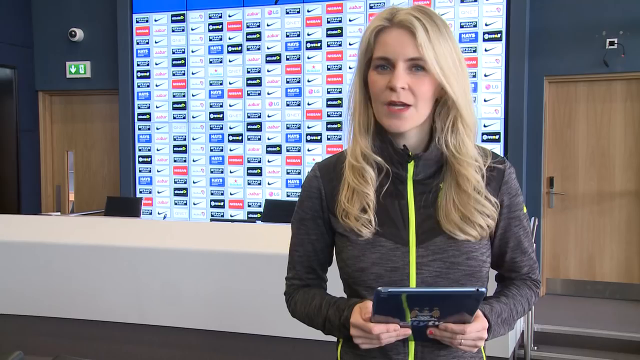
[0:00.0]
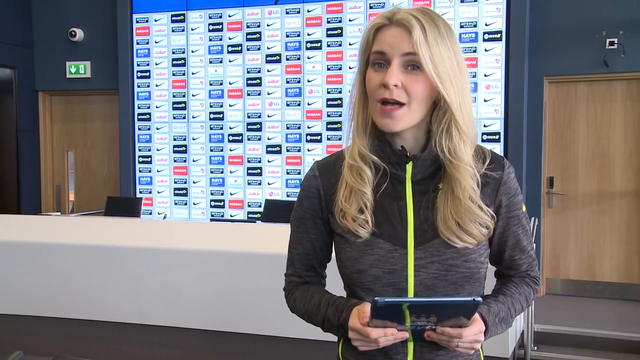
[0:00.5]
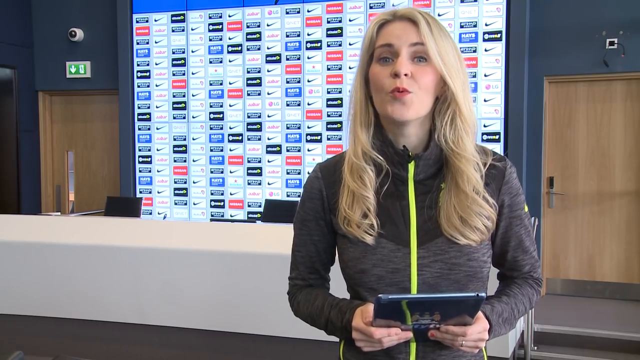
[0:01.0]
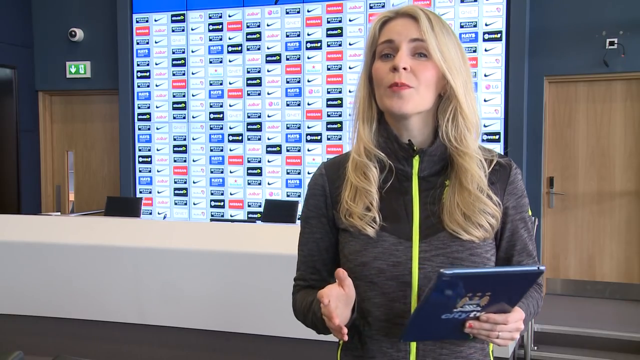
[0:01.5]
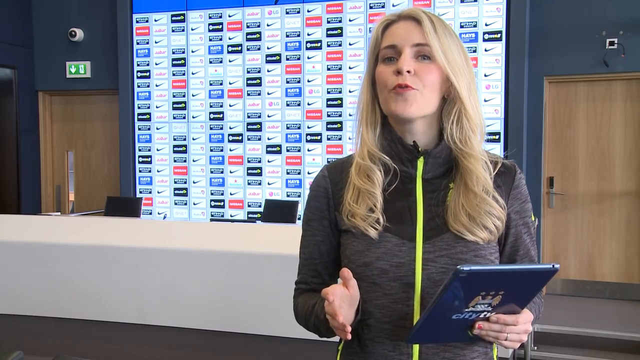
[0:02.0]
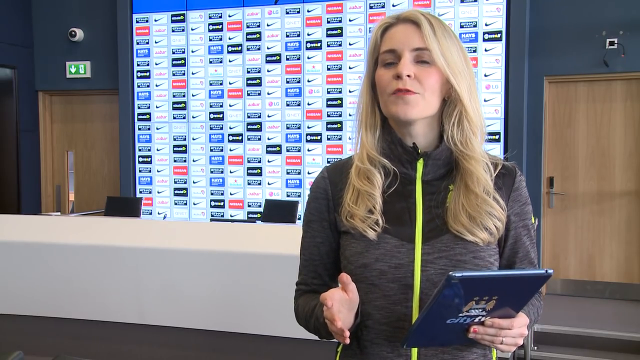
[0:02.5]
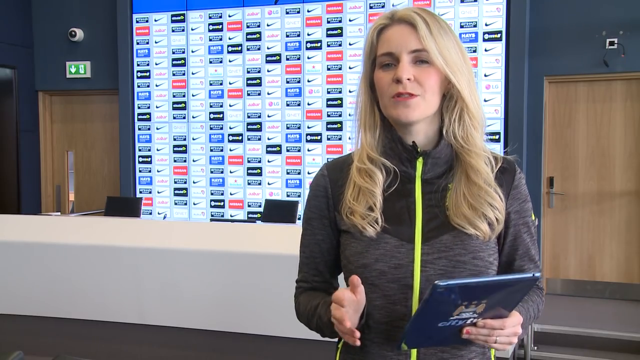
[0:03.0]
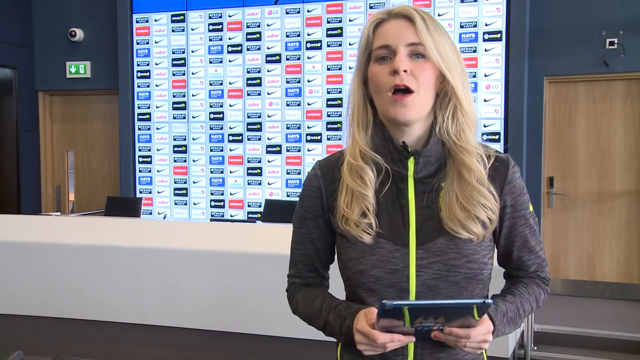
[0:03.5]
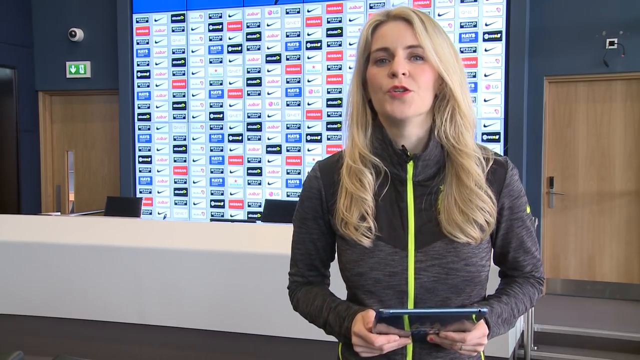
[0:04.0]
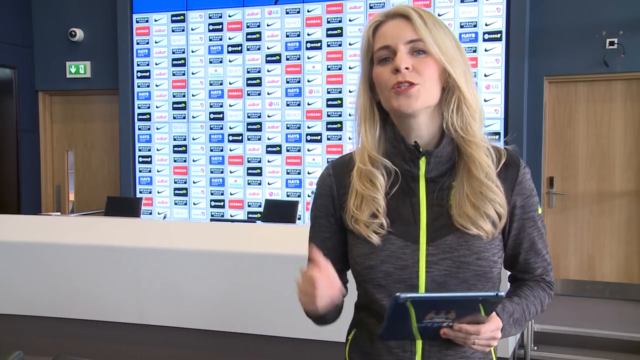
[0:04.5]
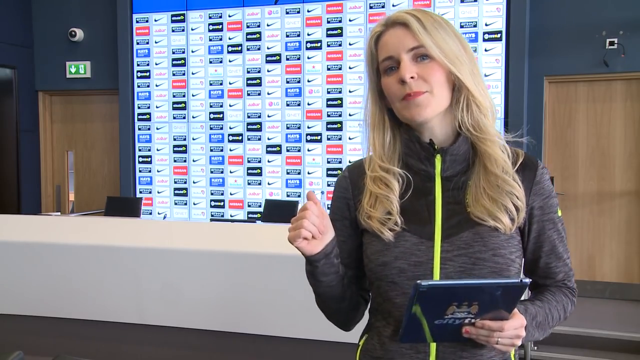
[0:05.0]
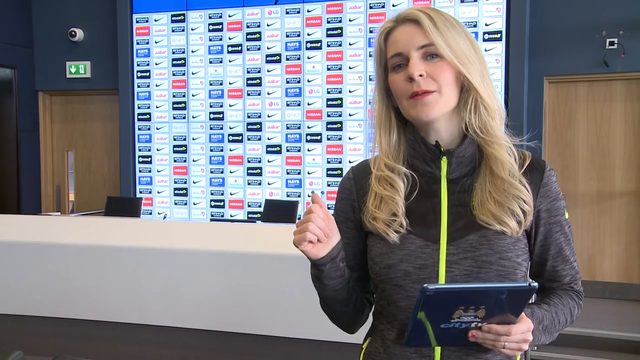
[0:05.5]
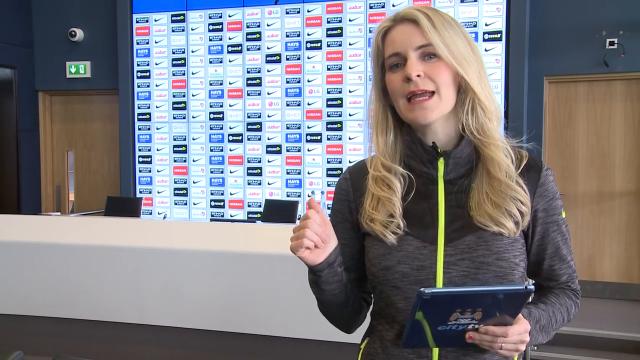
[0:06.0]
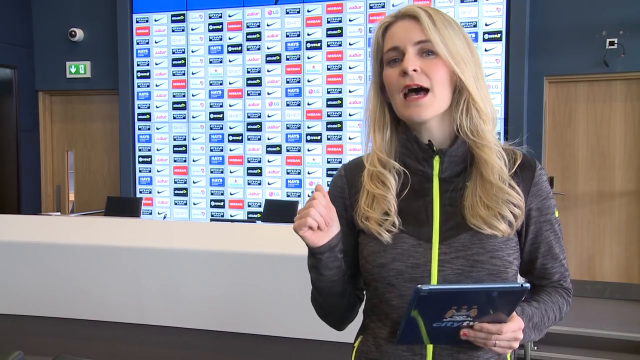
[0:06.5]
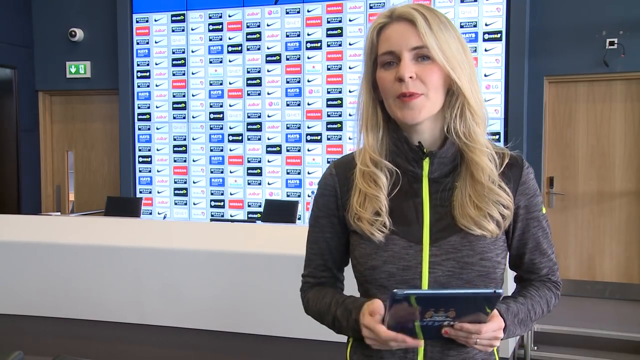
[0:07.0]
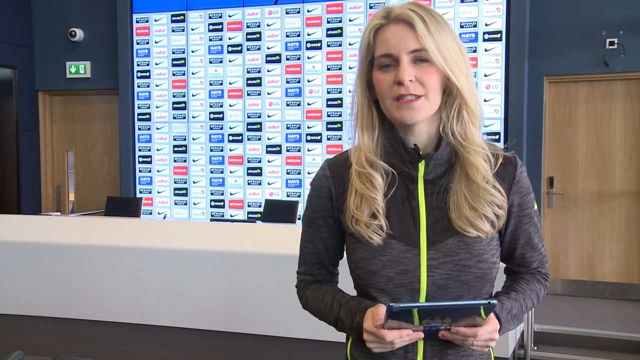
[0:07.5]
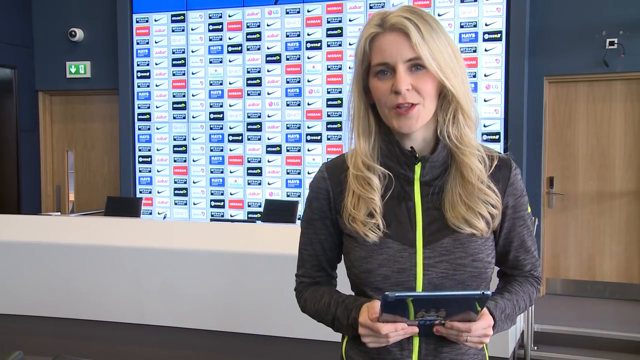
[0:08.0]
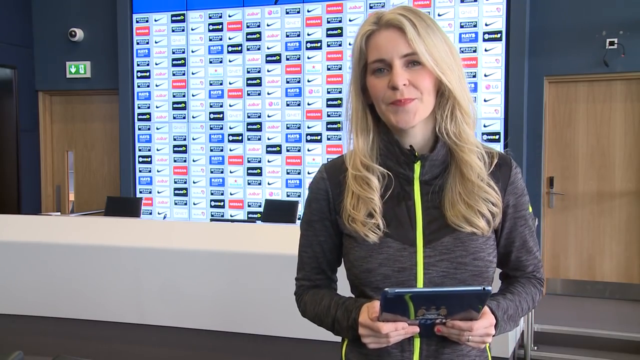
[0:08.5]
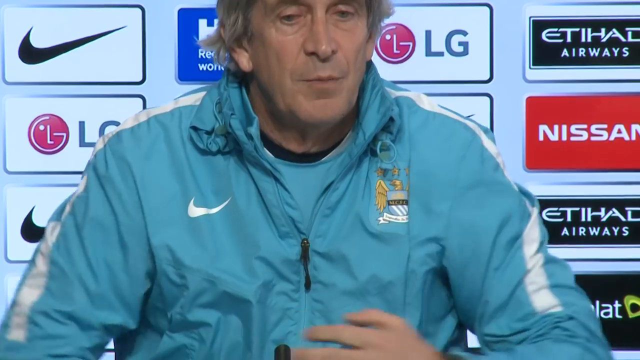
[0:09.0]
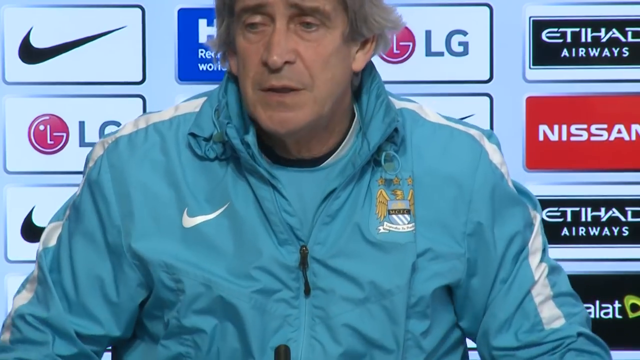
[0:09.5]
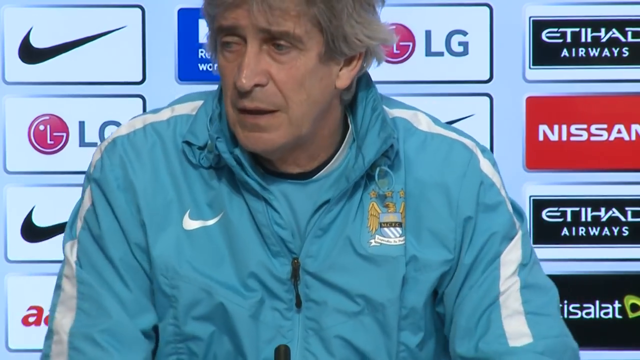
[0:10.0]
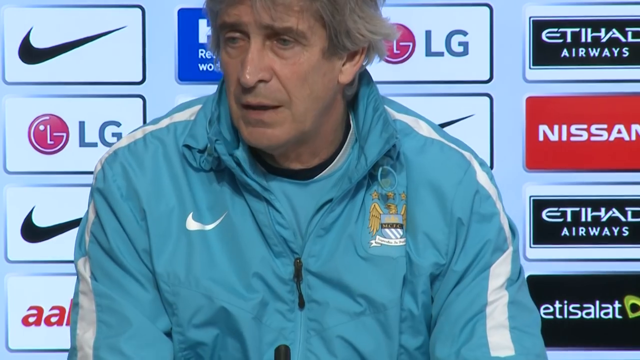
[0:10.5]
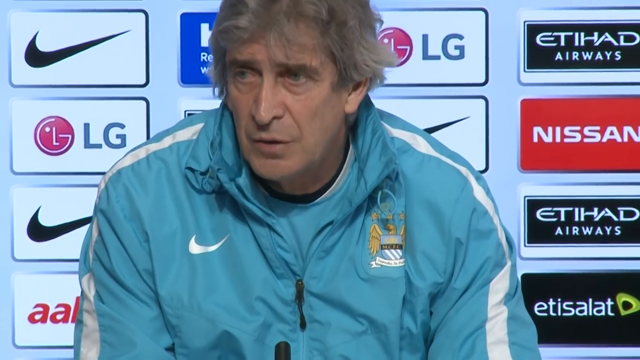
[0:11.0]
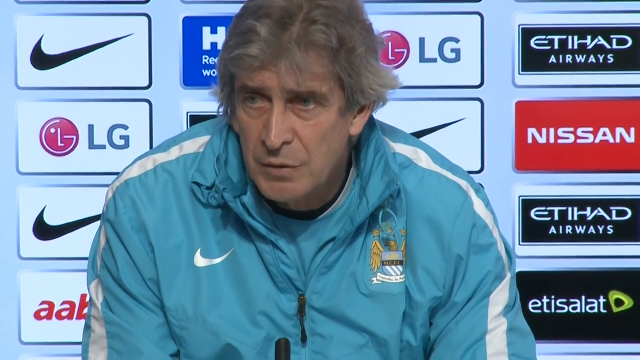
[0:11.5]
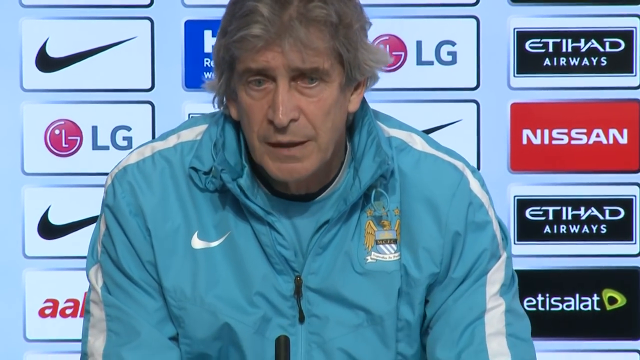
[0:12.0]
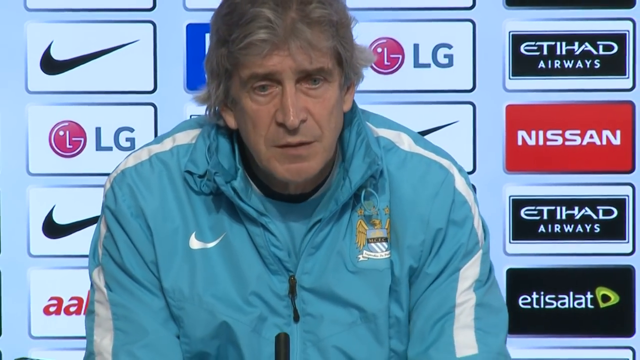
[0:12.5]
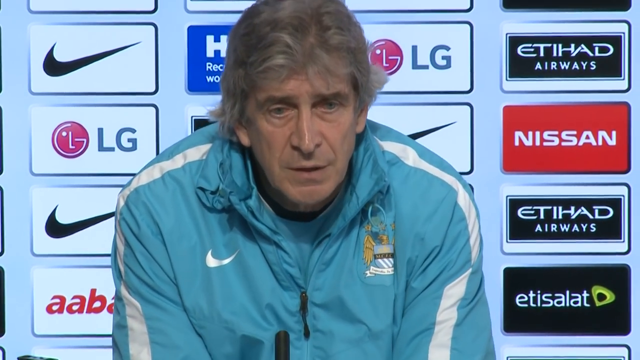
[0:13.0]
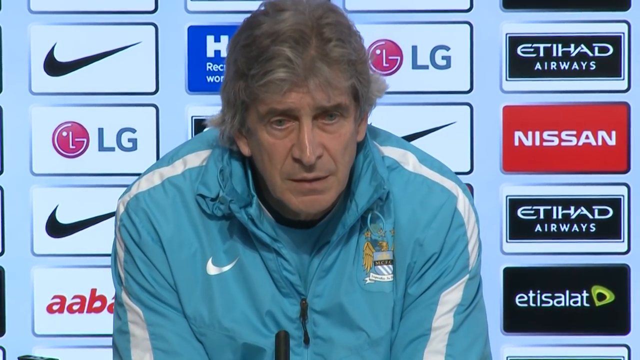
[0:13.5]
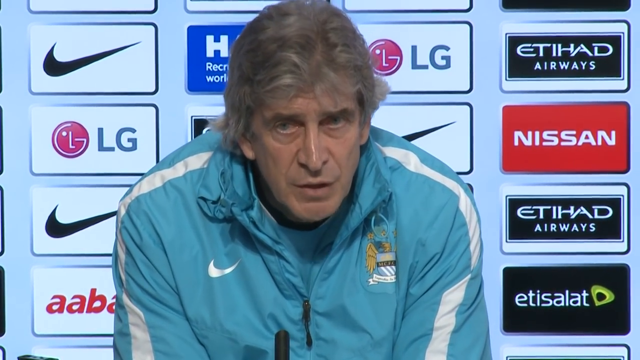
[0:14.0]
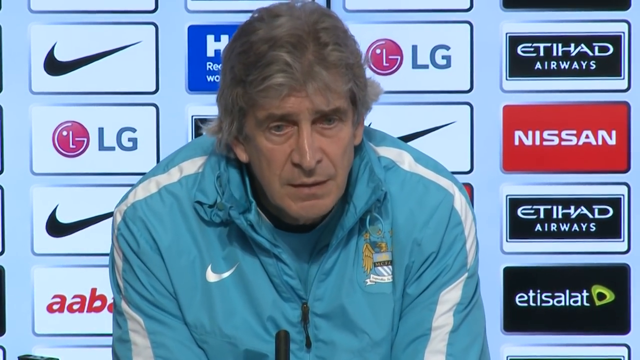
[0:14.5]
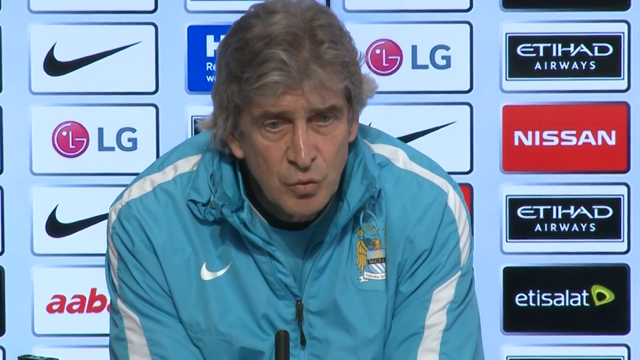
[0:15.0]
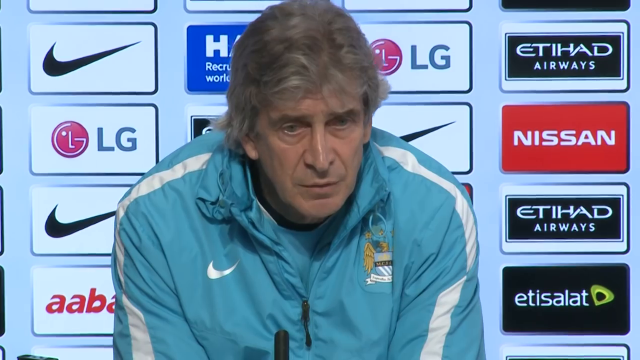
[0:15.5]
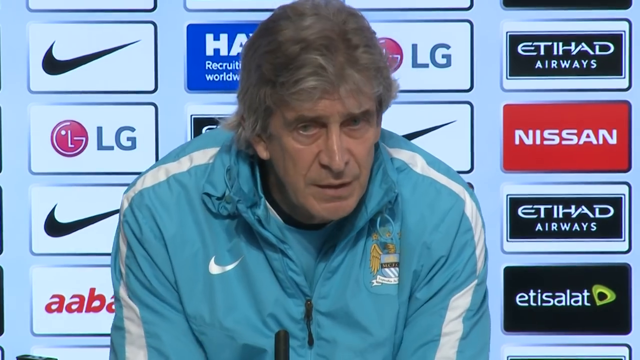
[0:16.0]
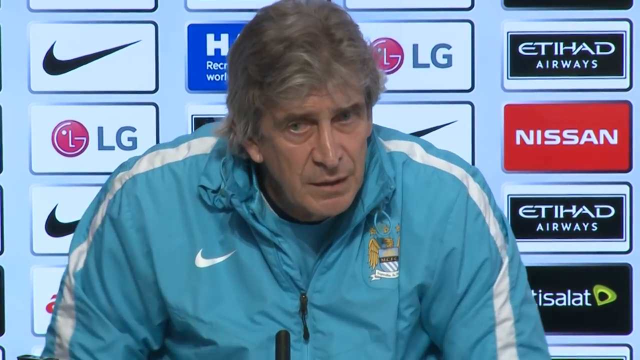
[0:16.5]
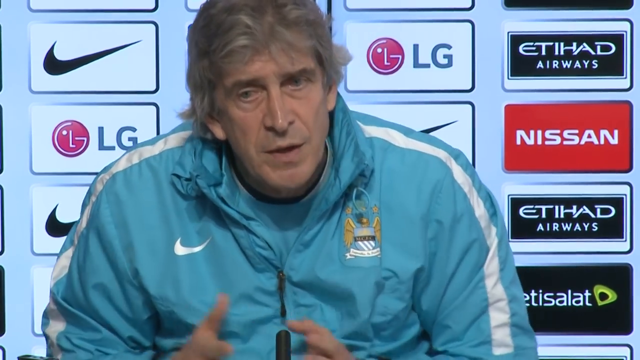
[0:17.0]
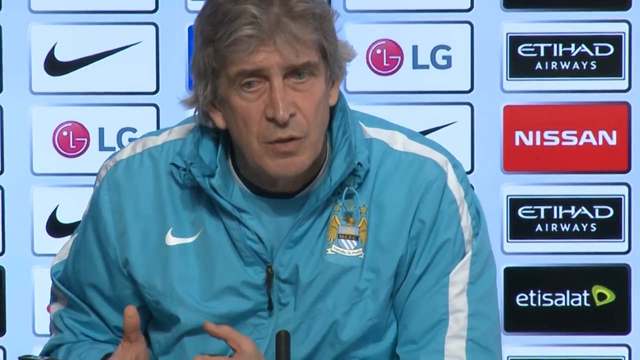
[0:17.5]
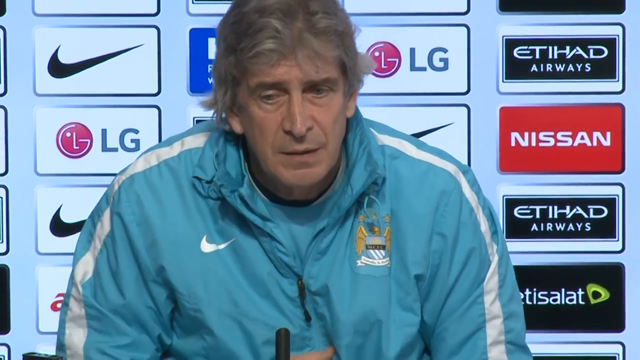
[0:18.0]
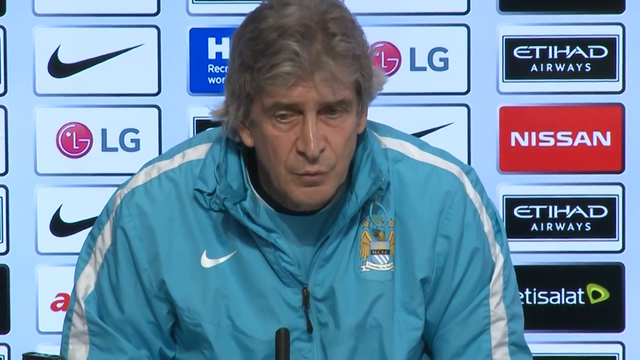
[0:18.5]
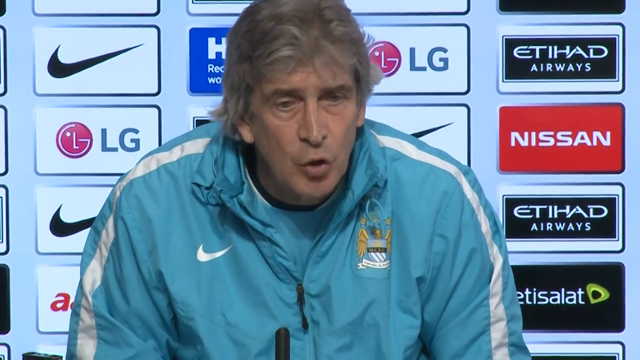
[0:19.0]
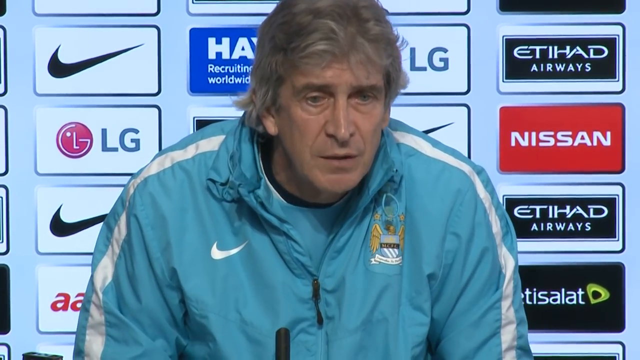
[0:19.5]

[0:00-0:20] A woman with blonde hair faces the camera and speaks. She wears a grey sweater with a bright green zipper and holds a blue notebook with a silver logo in her left hand. She gestures with her right hand, palm open, and then bends her right arm and holds her hand in a fist with her thumb up. She nods, and the camera cuts to an older man with gray hair in a light blue sports jacket with a Nike swoosh on the left breast and white stripes down each arm. He is a little hunched forward as he talks, and behind his head is a grid of logos, including LG, Nike and Nissan. Leaning forward with his back hunched, he gestures with his hands and moves them together over towards his right.